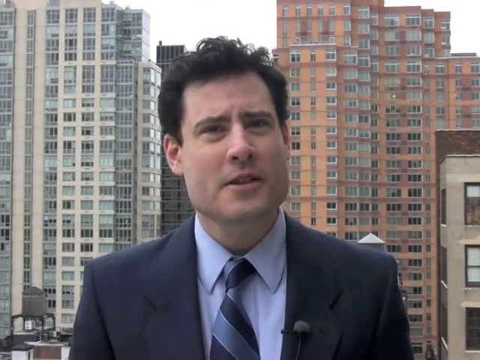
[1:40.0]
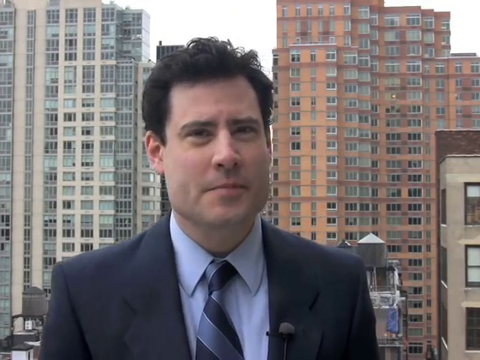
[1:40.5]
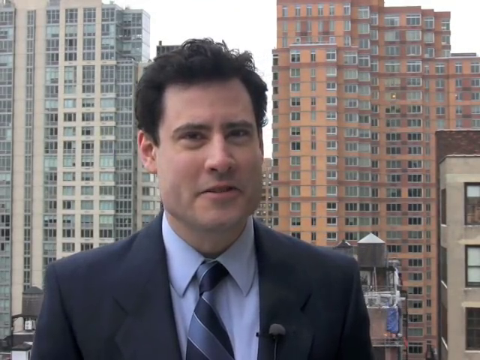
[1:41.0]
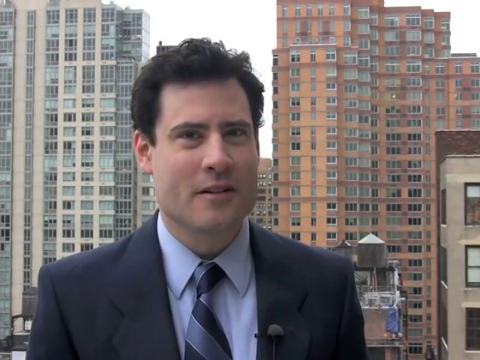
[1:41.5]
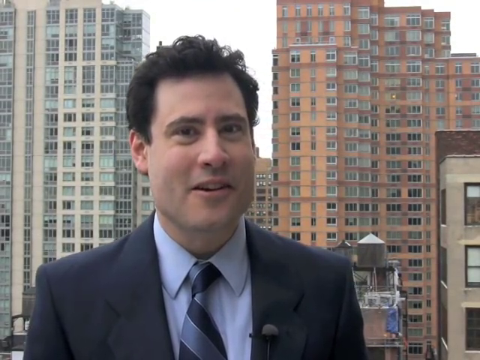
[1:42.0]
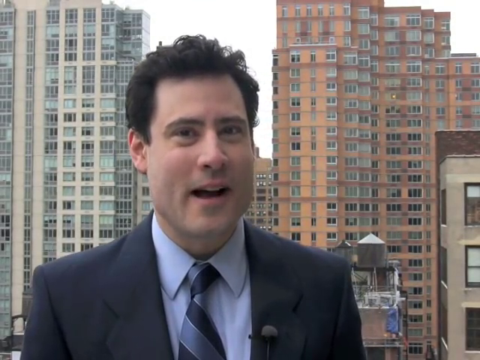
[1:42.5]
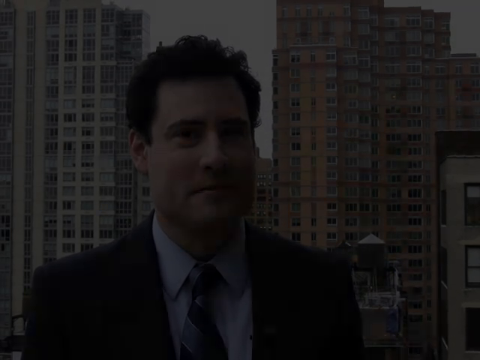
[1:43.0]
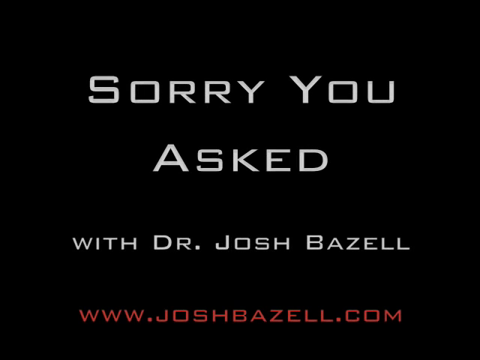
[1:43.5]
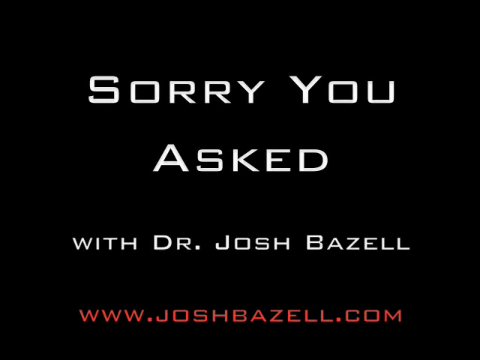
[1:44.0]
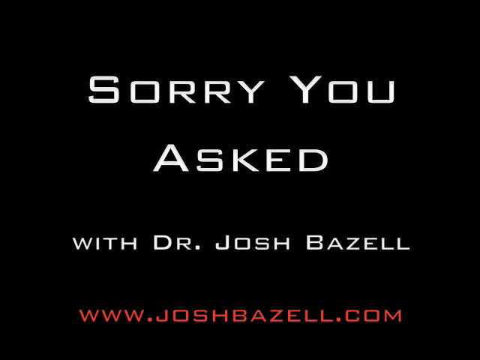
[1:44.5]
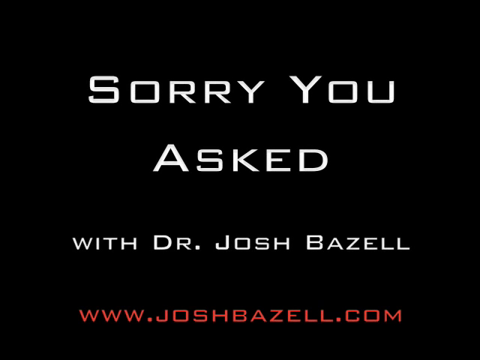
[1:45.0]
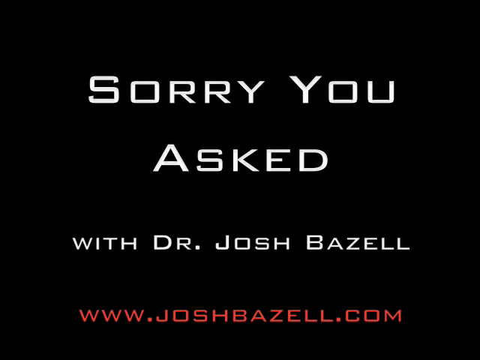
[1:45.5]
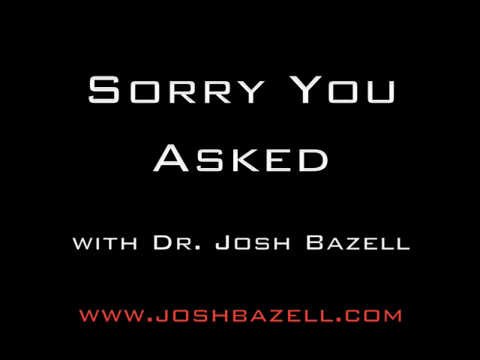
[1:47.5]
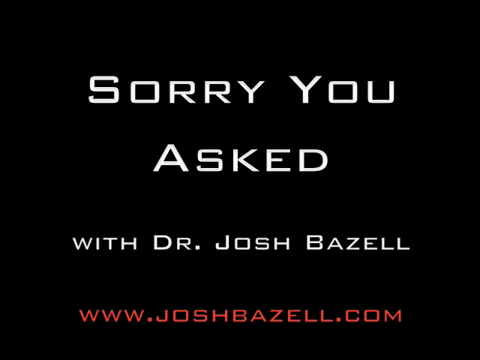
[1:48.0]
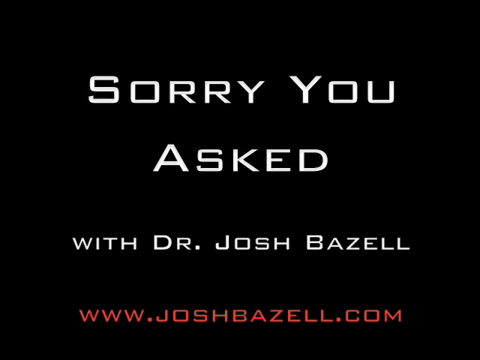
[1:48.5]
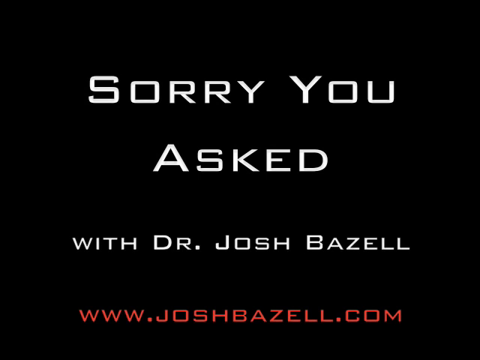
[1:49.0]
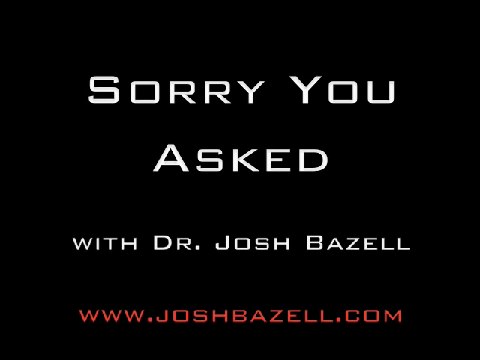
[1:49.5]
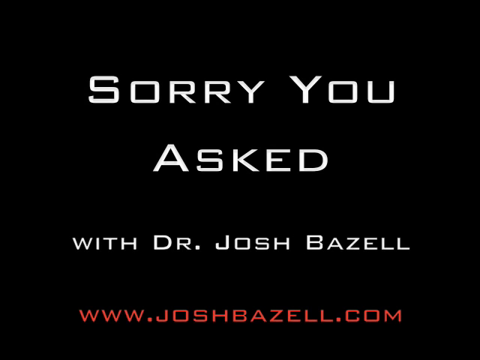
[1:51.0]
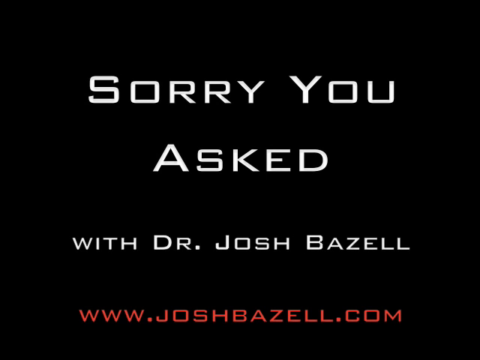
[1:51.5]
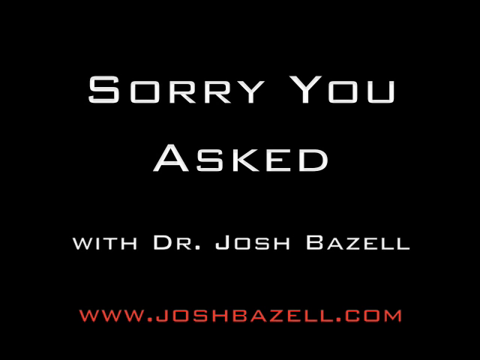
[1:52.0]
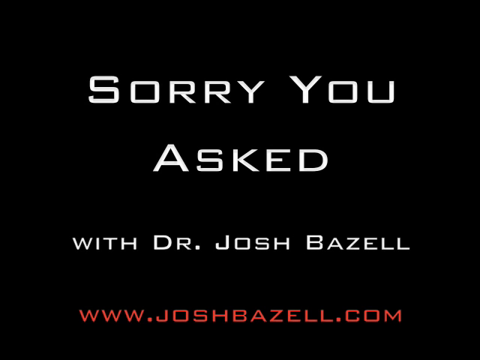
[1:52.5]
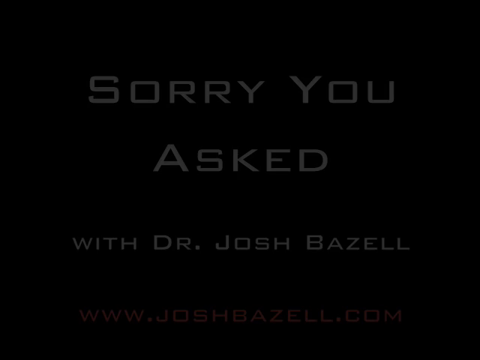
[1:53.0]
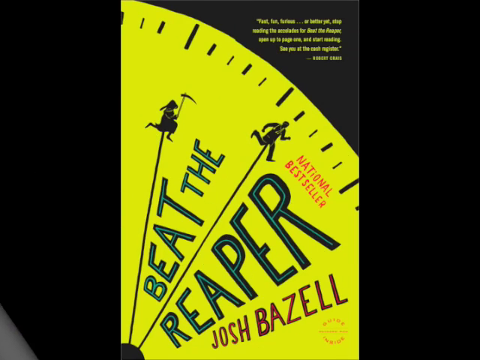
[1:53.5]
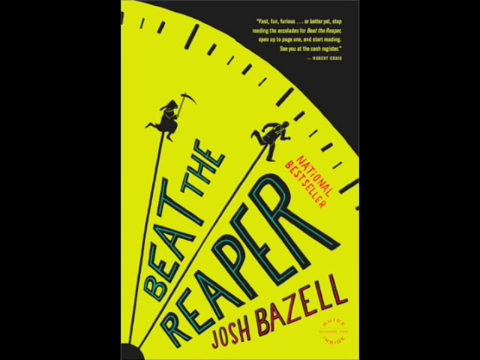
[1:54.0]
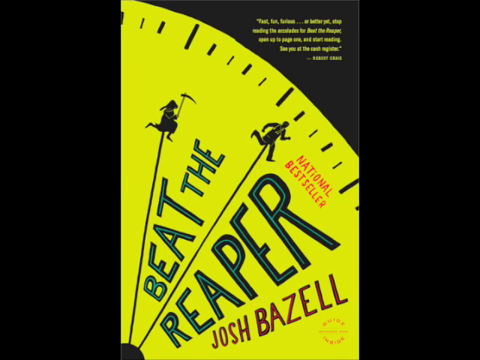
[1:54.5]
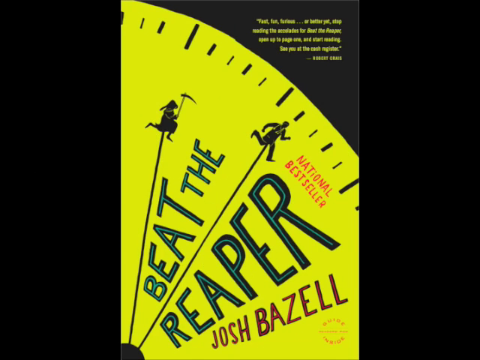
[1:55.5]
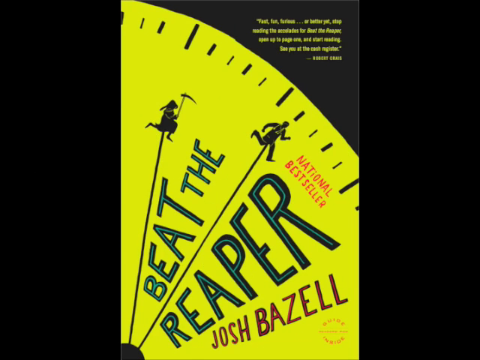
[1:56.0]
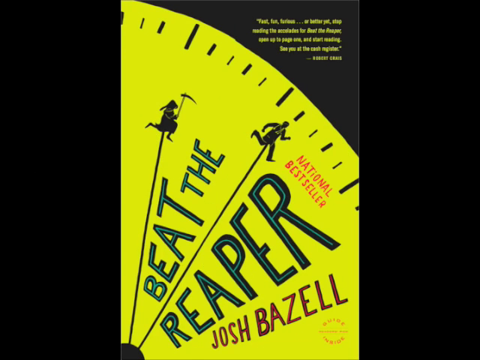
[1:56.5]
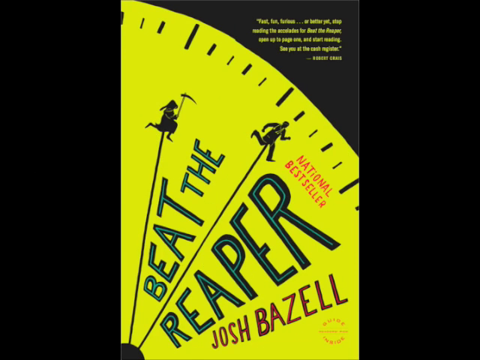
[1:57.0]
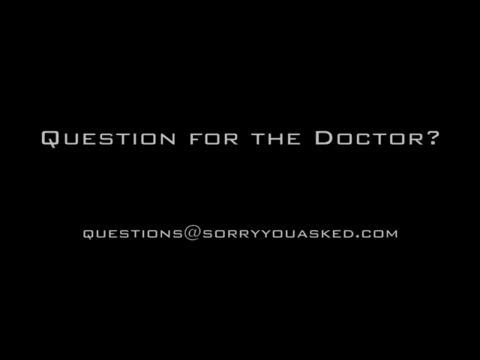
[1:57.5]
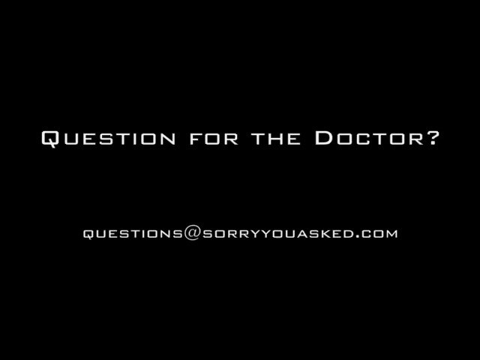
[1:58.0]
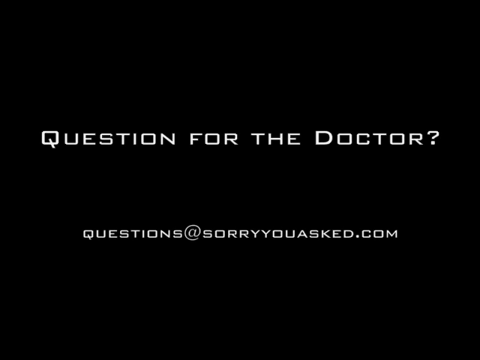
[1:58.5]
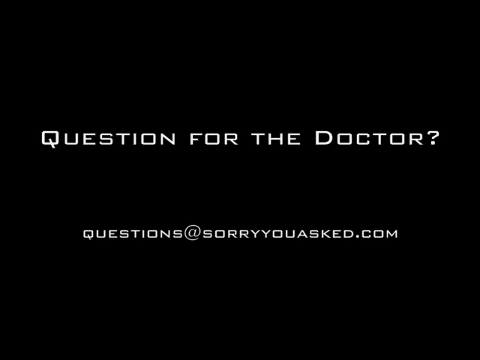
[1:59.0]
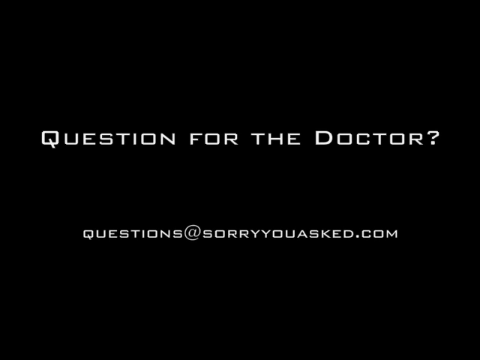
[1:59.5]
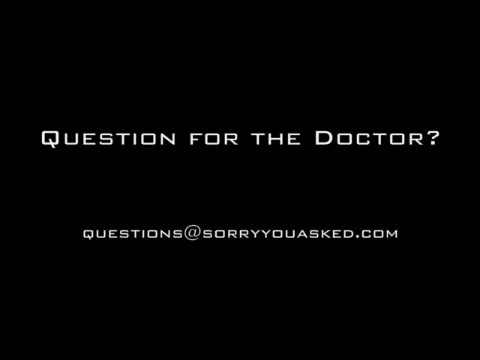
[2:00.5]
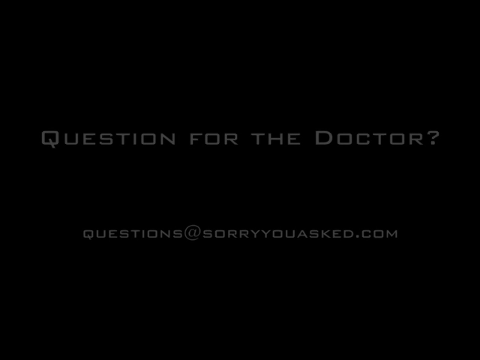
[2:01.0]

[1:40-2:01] A young man with a thick head of dark hair, fair skin and brown eyes faces the camera directly, with a hint of a dimple on the right side of his very square-jawed face. He is dressed in professional attire, and the background shows daytime, with high-rise brown buildings on the right and white buildings on the left. As he talks, a black screen flashes with white text reading "sorry you asked, with Dr. Josh Bazell"; this is the man talking to the camera. Below, in red text at the bottom, it reads "www.joshbazell.com". Next comes what looks like a bright yellow clock, with only the top corner of the rounded clock visible; one hand looks like the grim reaper on the left and the other hand has an image of a man running. It reads "beat the reaper" and "National bestseller", by Dr. Bazell. The video ends with a black screen with white text reading "question for the doctor" and, below that, "questions at sorryyouasked.com".